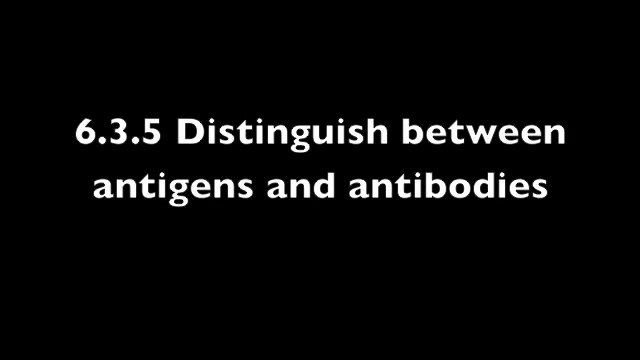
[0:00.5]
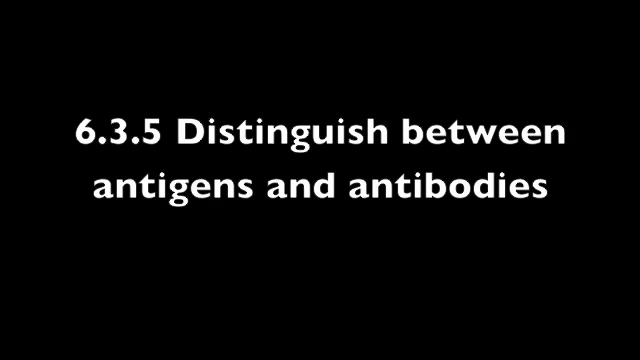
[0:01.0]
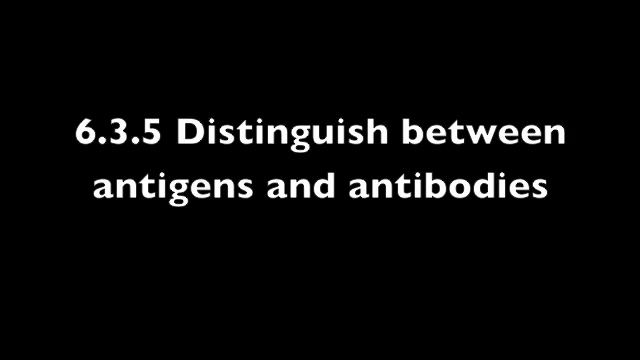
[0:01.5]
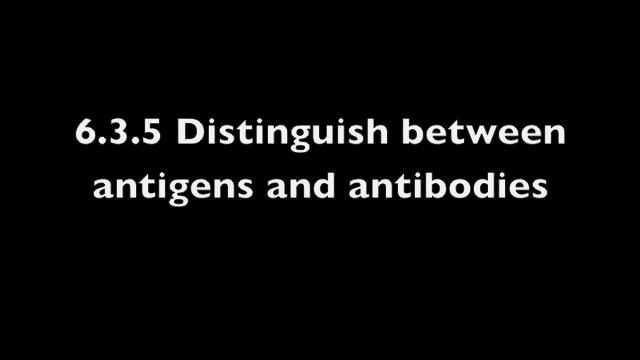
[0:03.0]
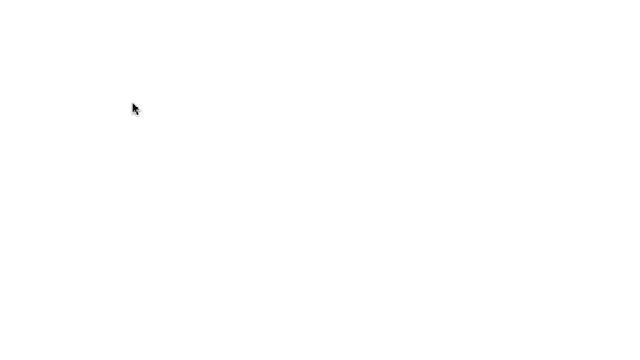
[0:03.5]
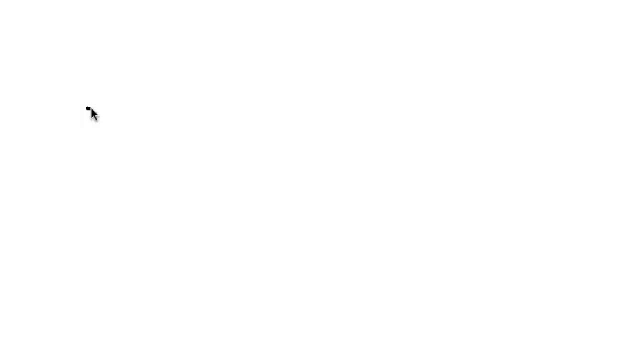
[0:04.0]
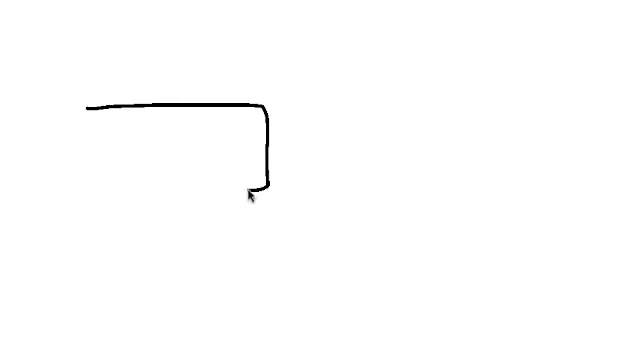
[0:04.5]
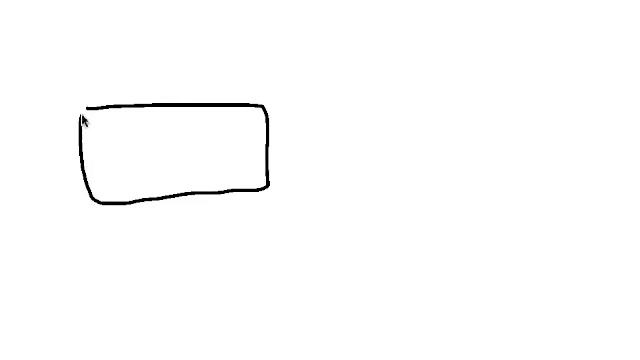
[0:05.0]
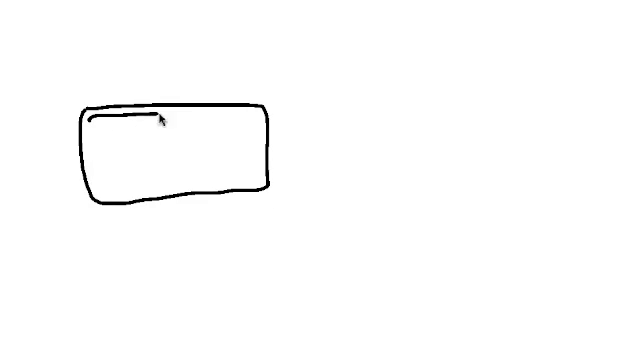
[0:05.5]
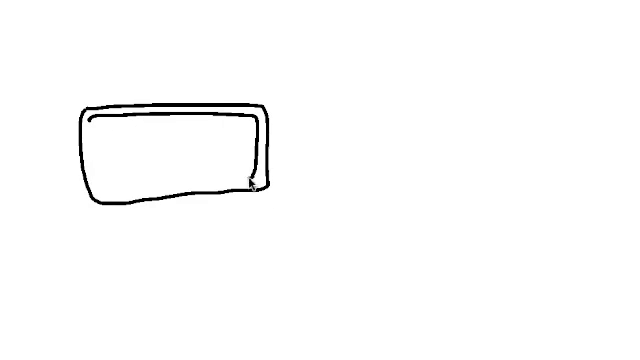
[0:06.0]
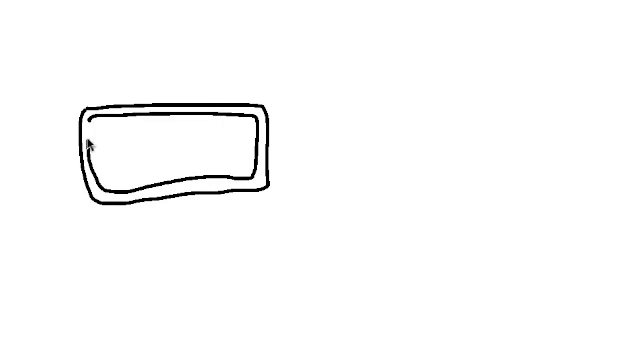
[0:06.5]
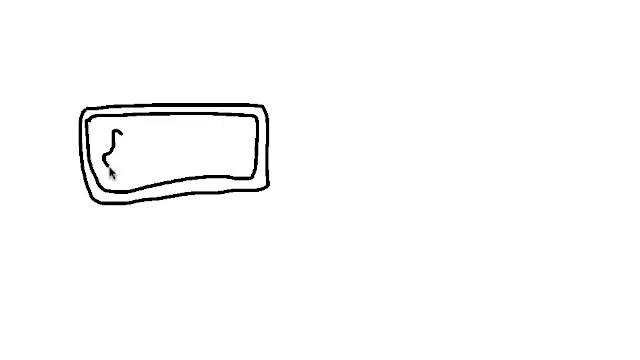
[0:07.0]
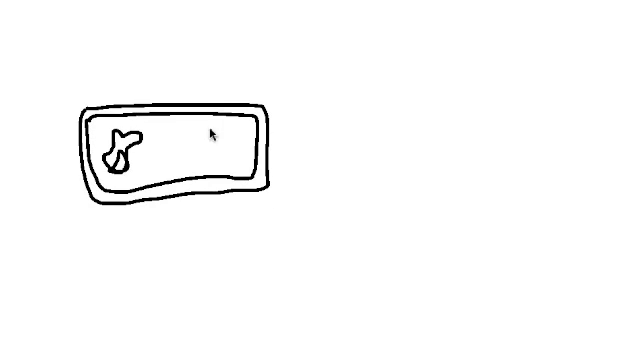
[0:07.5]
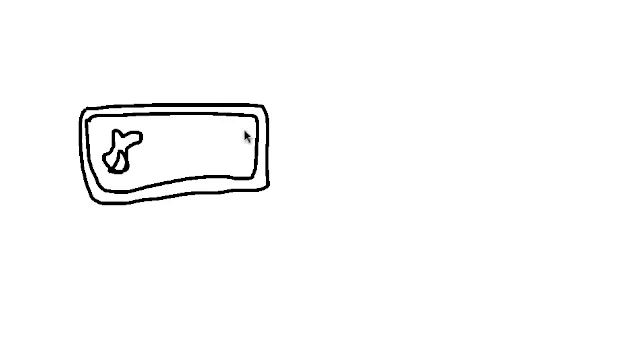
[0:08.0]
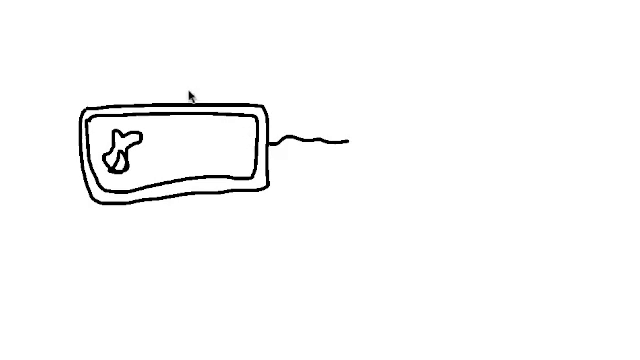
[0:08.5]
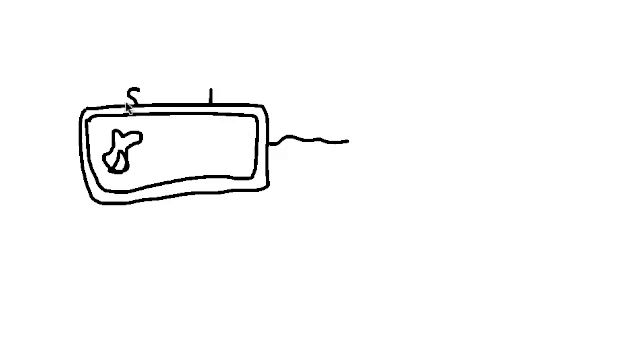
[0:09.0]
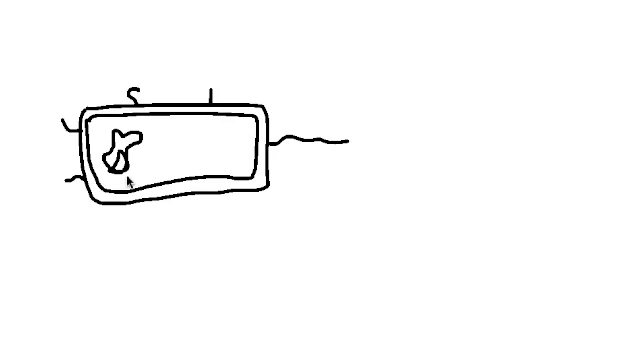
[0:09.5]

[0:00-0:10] The video opens on a black screen with the text "6.3.5, distinguish between antigens and antibodies" written on it. On the next screen, a horizontal rectangle is drawn in black on the left side of the screen. An arrow is shown doing the drawing, and it draws a similar, smaller rectangle inside the first one. It then draws a squiggly circle shape on the left inside the rectangle, followed by lines all around the outside of the rectangle. The drawing looks kind of cartoonish, and the background is solid white.